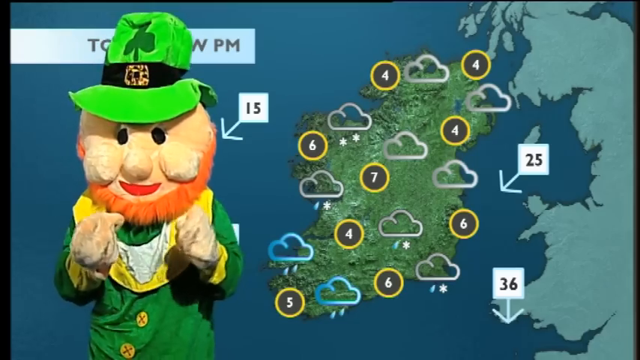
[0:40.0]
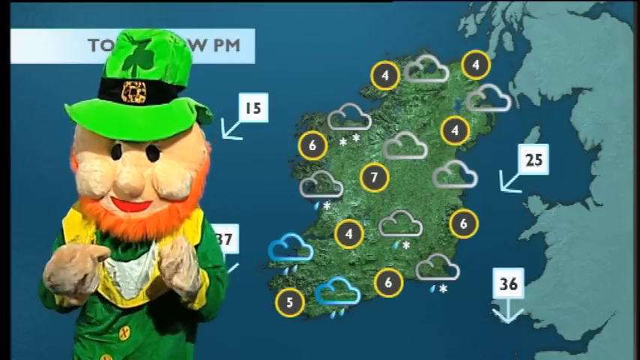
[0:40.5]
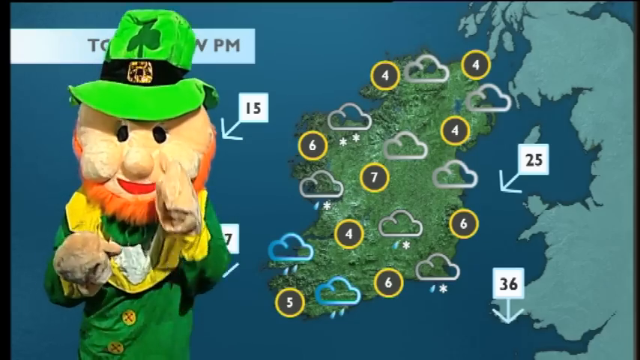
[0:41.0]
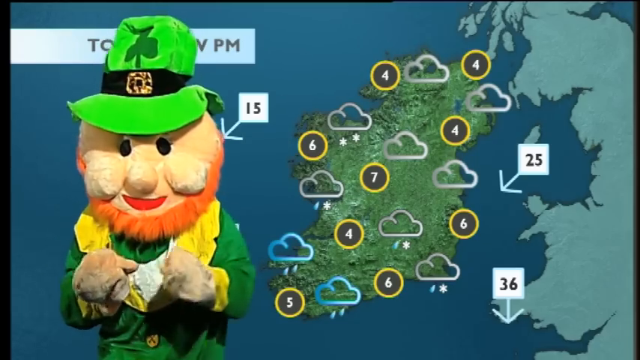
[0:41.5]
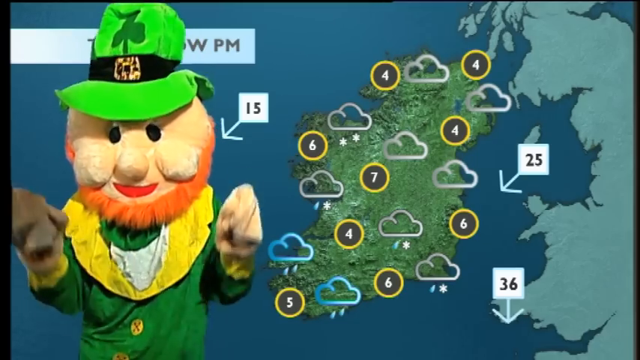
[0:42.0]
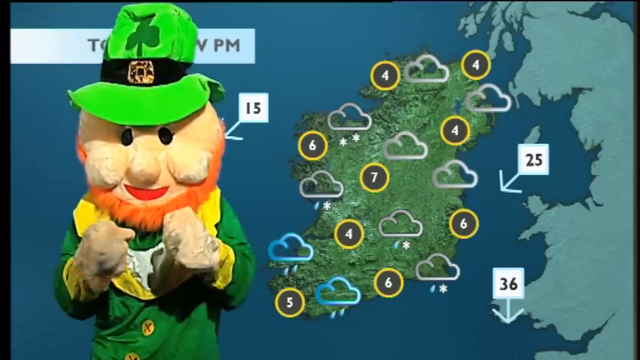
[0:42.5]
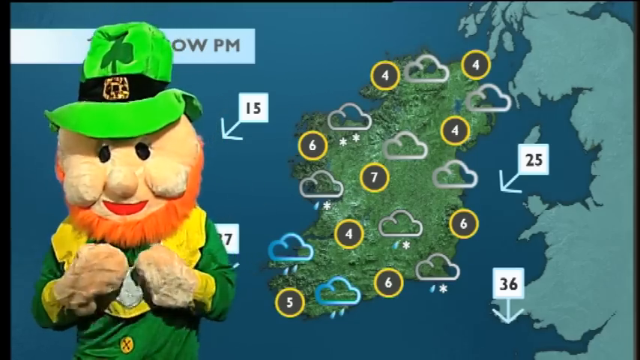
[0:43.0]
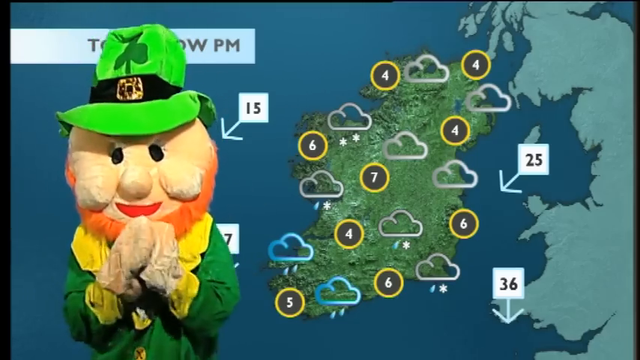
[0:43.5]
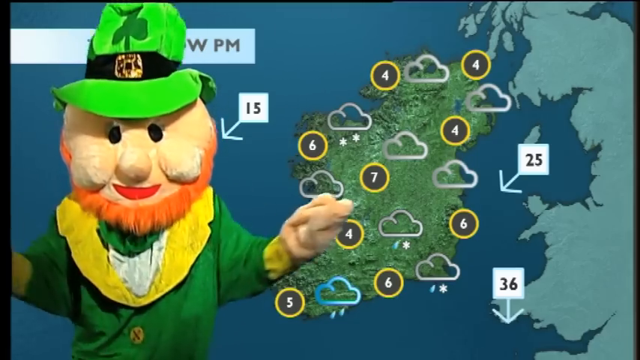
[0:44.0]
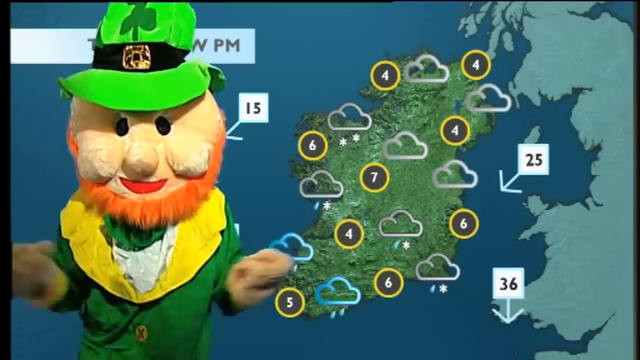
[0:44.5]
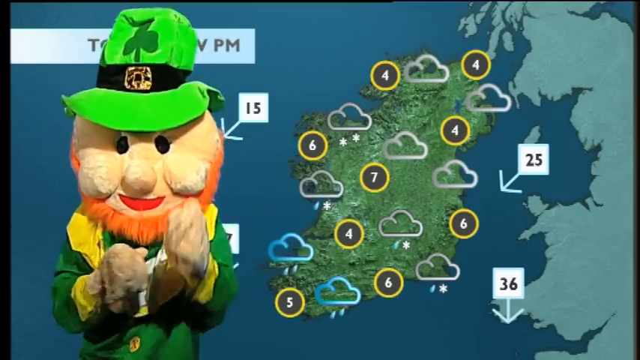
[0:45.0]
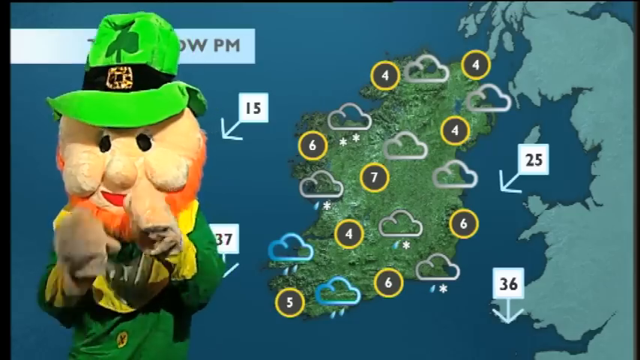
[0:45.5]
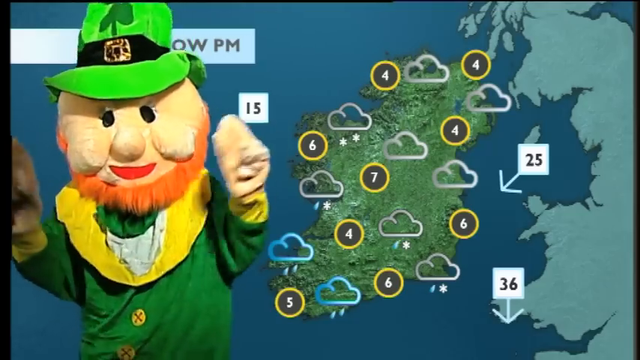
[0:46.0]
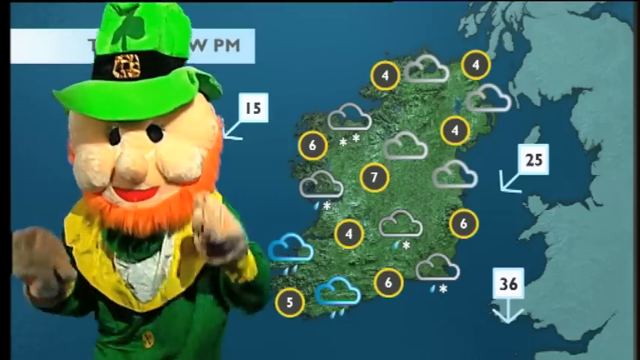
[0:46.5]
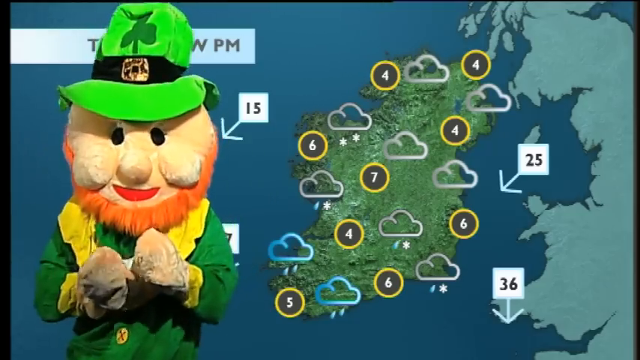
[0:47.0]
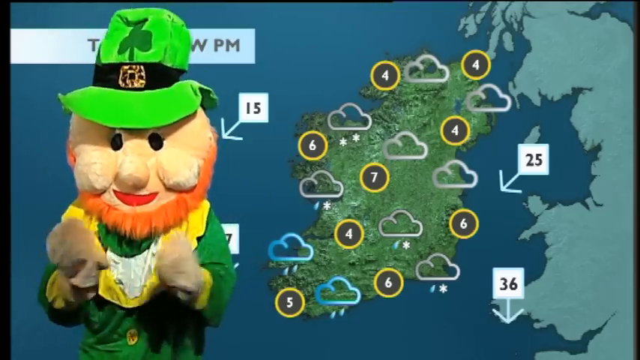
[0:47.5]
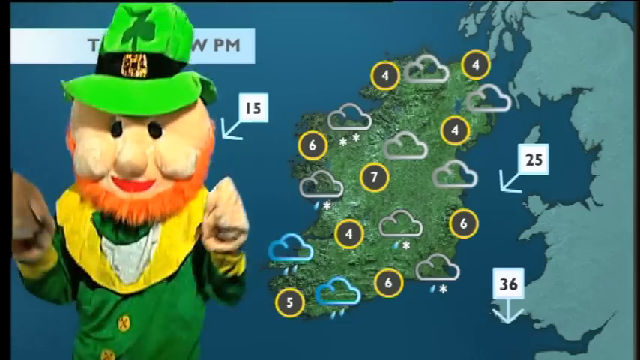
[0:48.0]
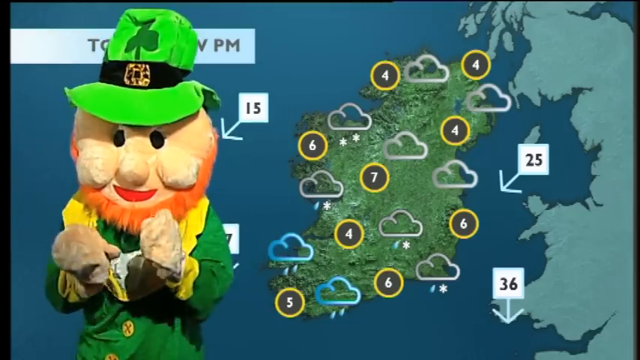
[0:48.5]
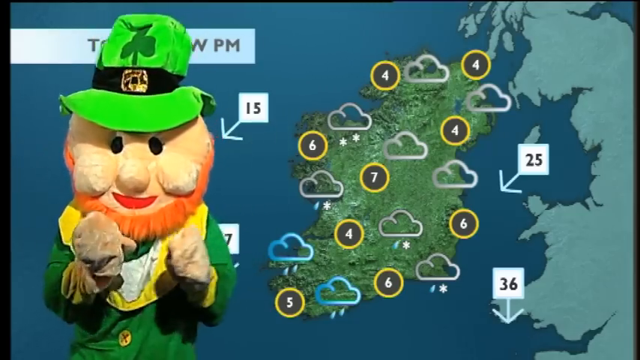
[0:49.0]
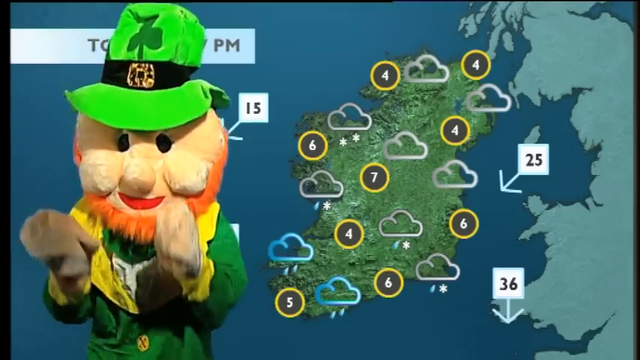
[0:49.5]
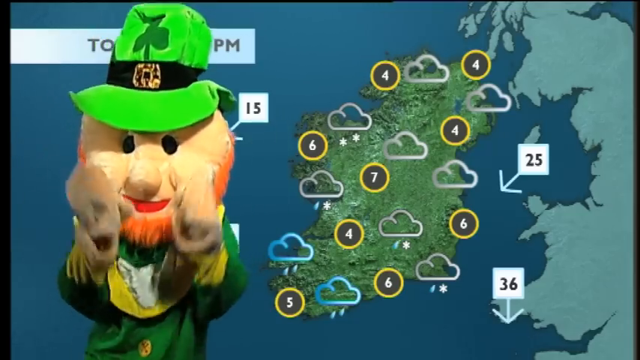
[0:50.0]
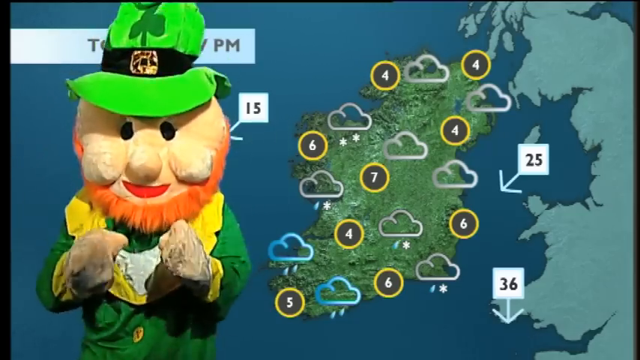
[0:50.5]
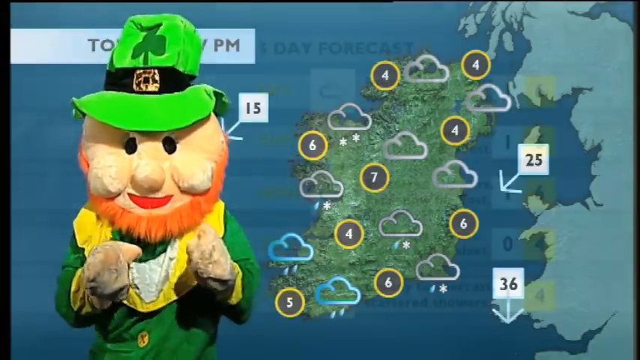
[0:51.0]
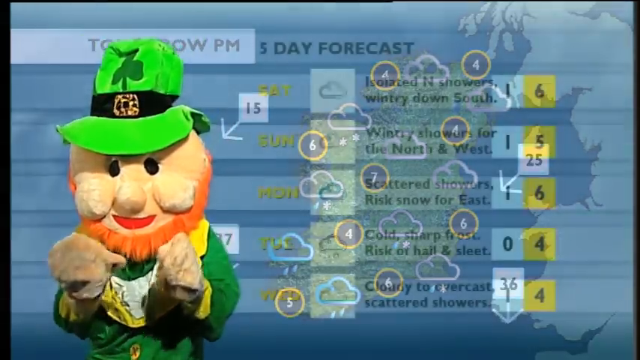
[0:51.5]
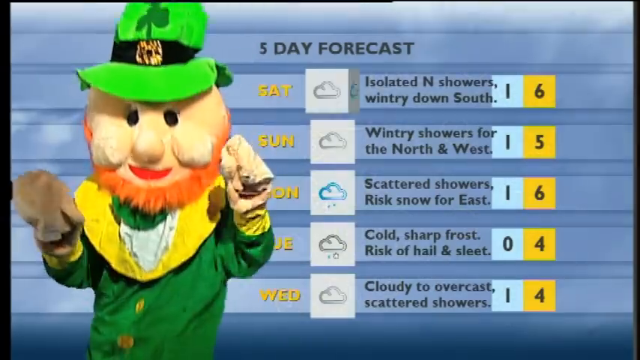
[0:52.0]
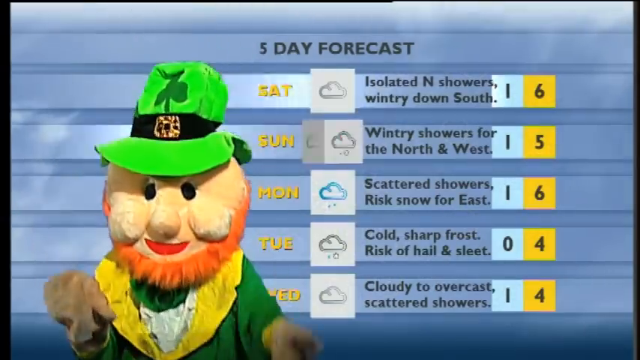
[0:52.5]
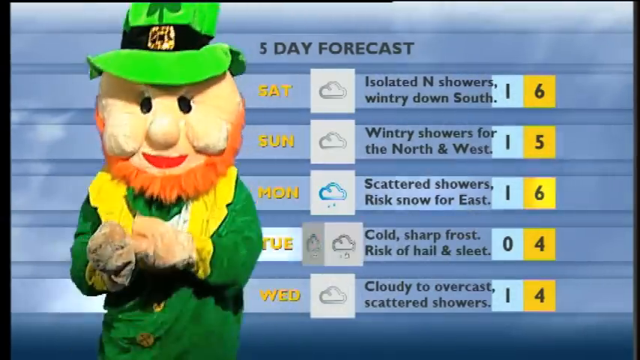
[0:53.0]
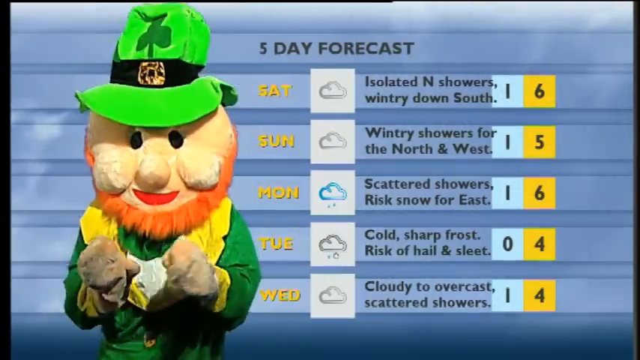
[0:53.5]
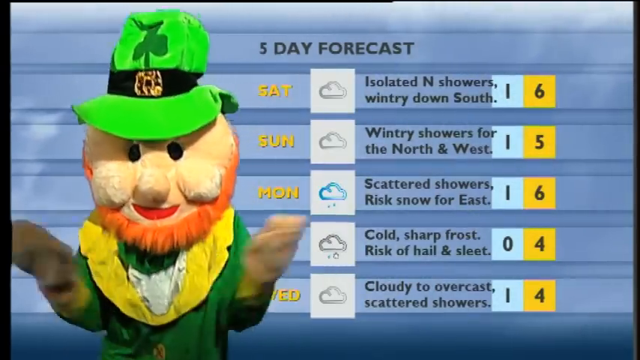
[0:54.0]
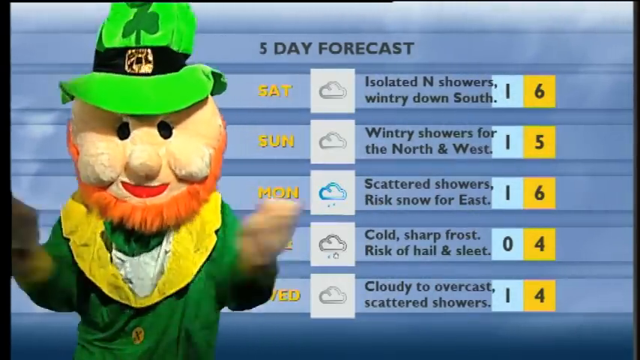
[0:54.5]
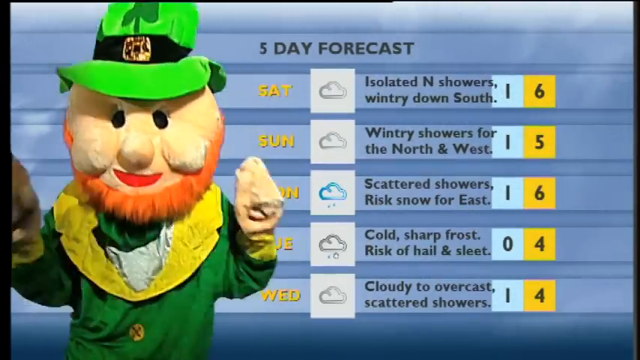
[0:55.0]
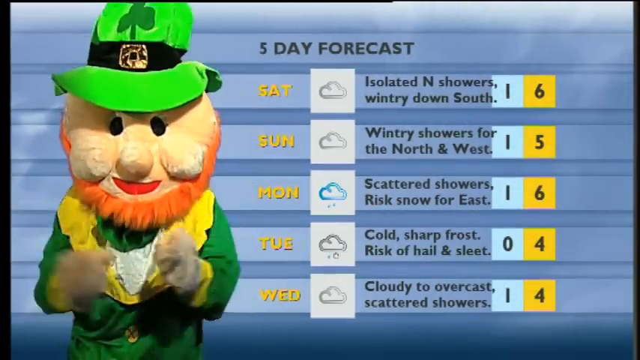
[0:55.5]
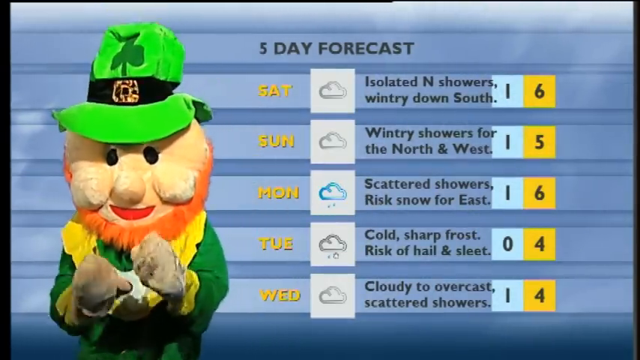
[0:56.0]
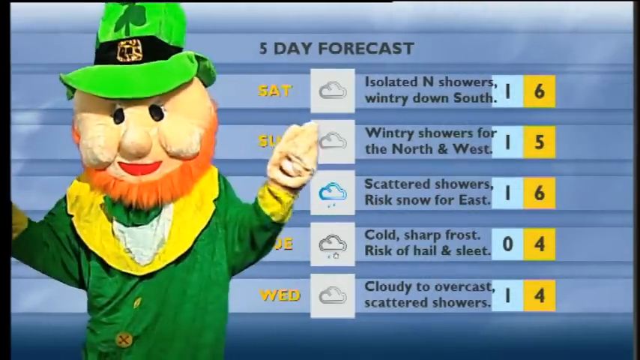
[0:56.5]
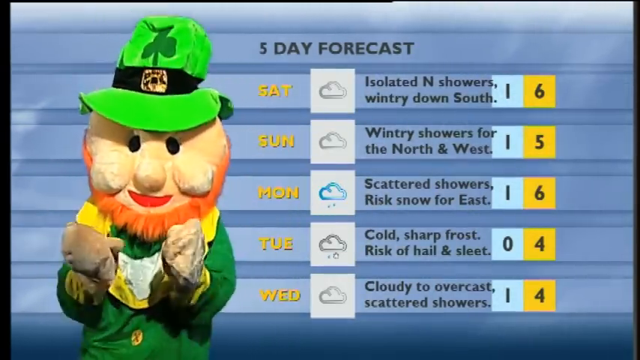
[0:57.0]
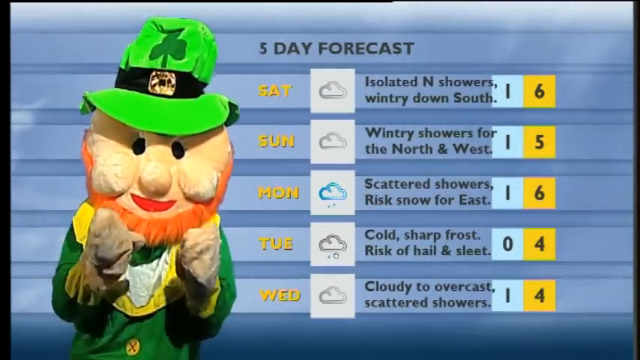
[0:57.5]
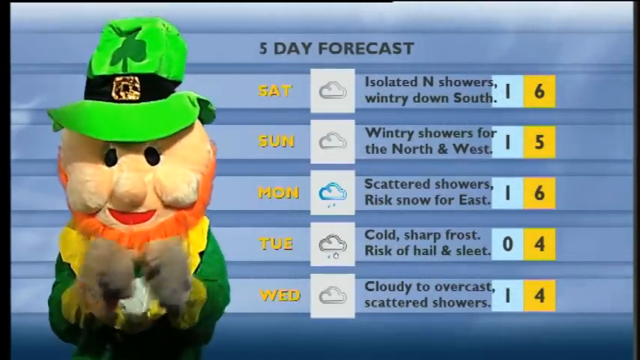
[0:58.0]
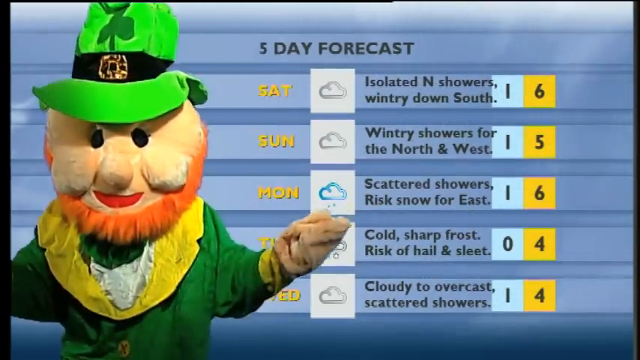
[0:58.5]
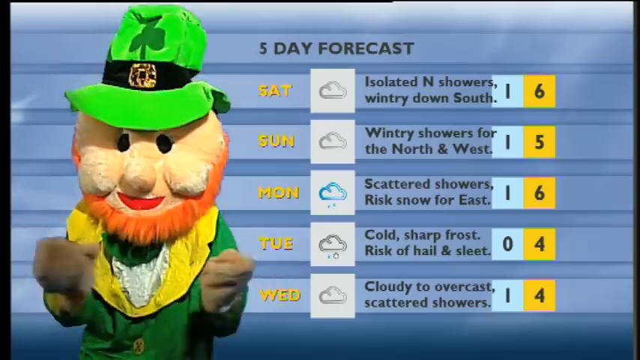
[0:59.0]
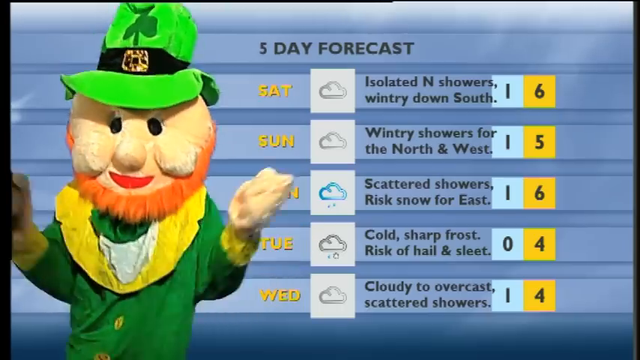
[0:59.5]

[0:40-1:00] The cartoon wears a green outfit and a green hat with a black ribbon; it has chubby cheeks that are pushed out, black eyes, a pointy nose, red lips and an orange mustache, and its jumpsuit is mainly green with yellow at the edges. A weather forecast is behind it, and behind its head "tomorrow p.m." is written, with the numbers 15, 25, 36 and 6, 7, 5. There appears to be a map; the right-hand side seems to show water in light blue, the background is fully dark blue, and the middle seems to be green. There are shapes of stars, circles with numbers in them, and clouds. The cartoon dances continuously, showing signs of celebration. Then a column listing a five-day forecast appears: Saturday shows isolated showers, wintry down south; Sunday shows wintry showers for the north and west, with 15; Monday shows some rain, with a blue cloud with rain in it, indicating scattered showers; Tuesday has a cloud with "sharp frost" and "O4" written; and Wednesday shows cloudy to overcast scattered showers, with 1-4.